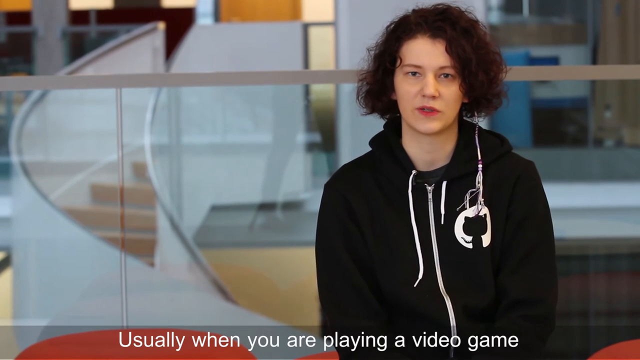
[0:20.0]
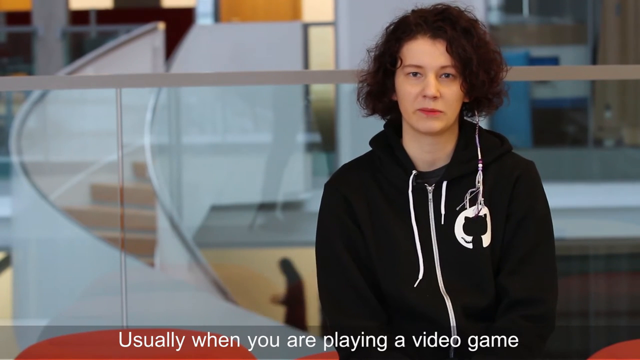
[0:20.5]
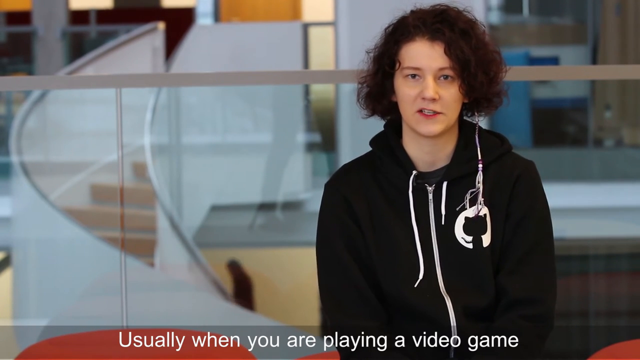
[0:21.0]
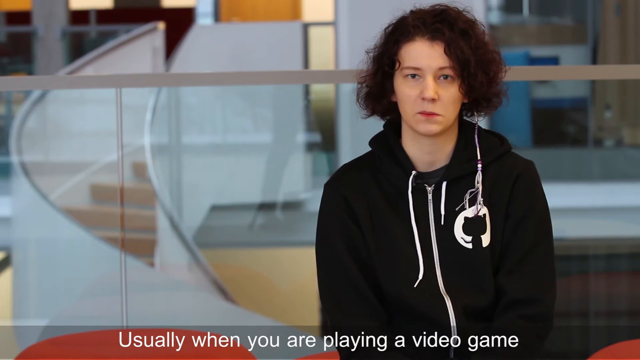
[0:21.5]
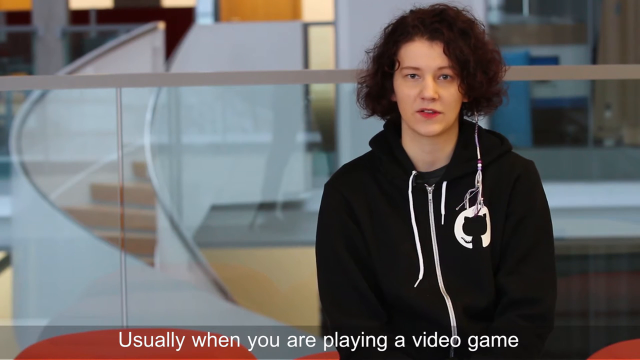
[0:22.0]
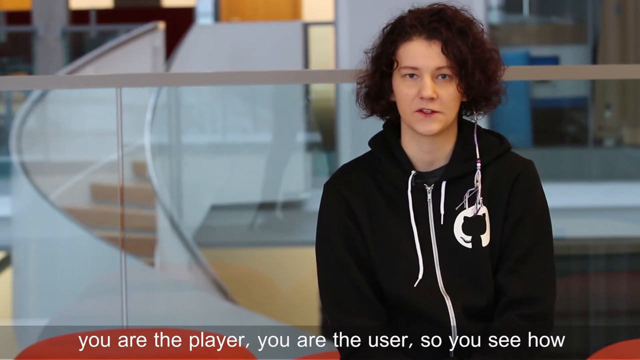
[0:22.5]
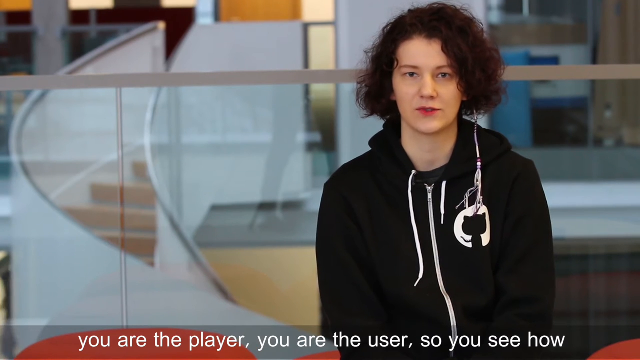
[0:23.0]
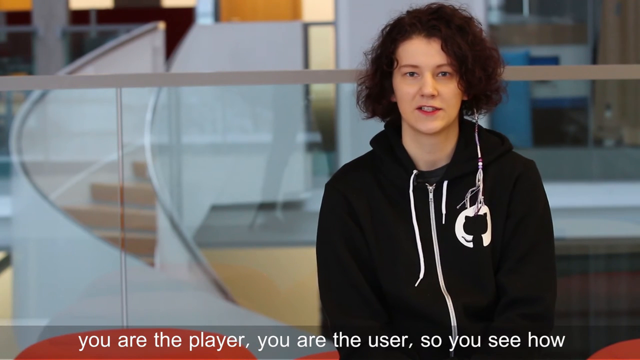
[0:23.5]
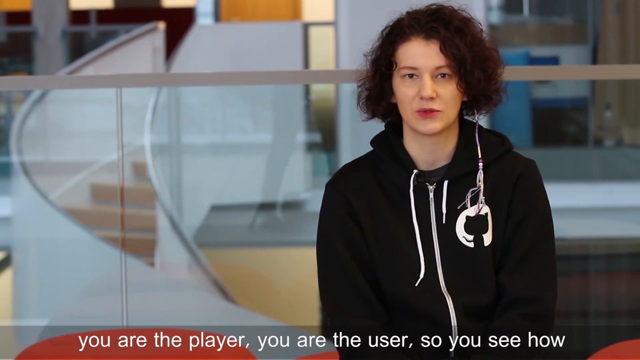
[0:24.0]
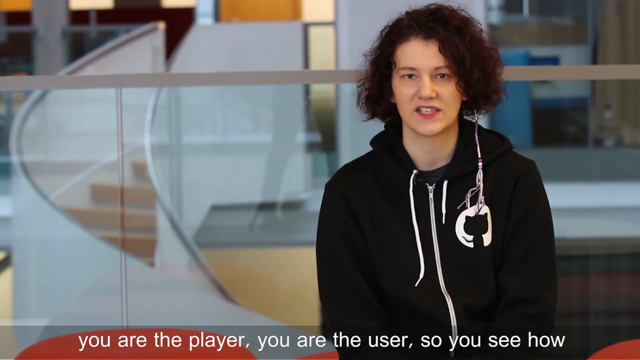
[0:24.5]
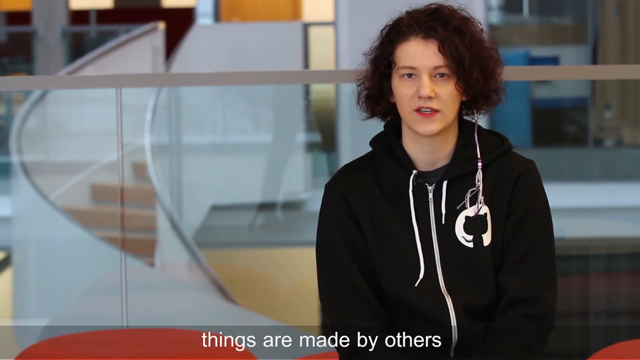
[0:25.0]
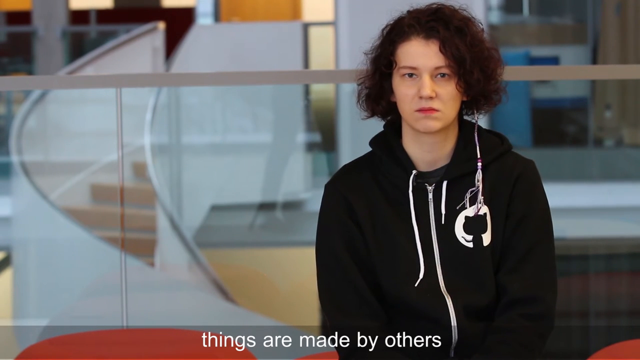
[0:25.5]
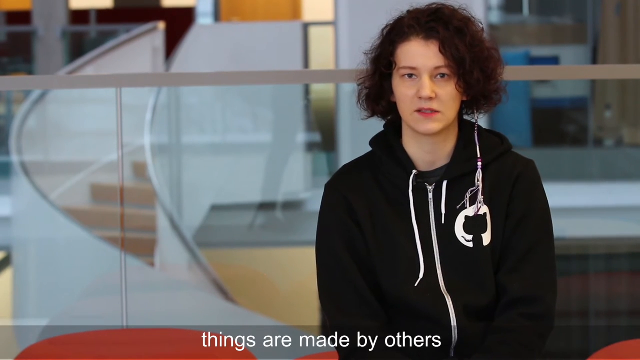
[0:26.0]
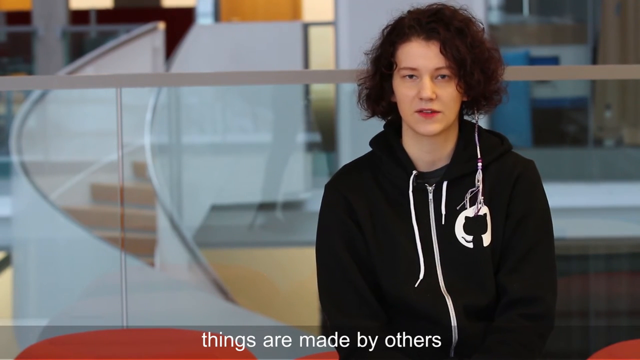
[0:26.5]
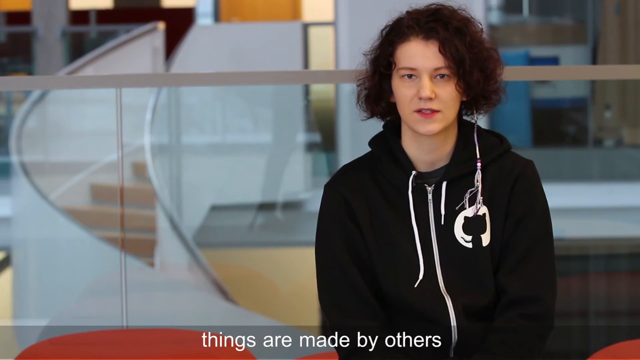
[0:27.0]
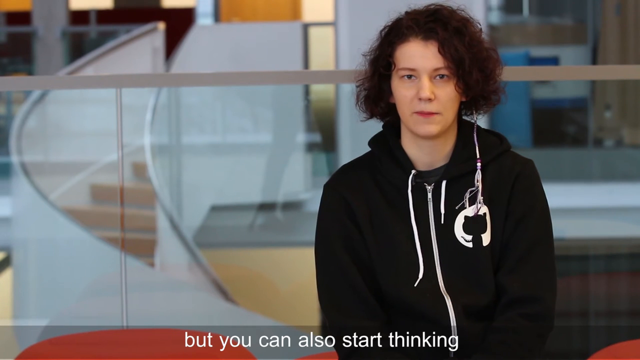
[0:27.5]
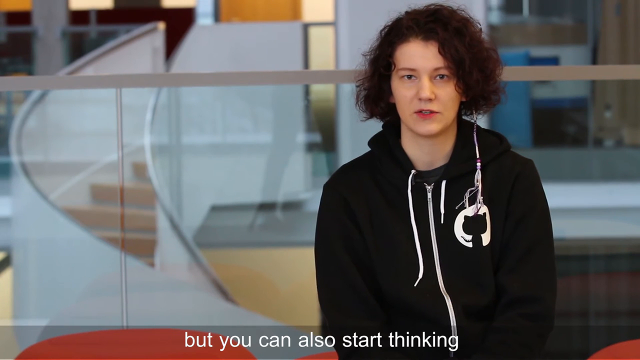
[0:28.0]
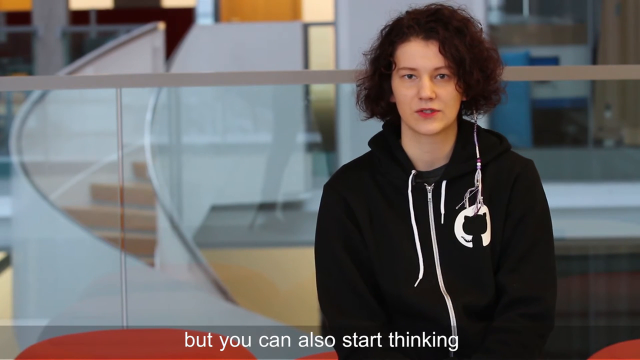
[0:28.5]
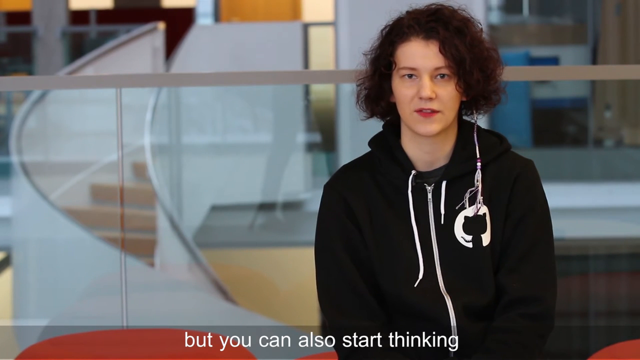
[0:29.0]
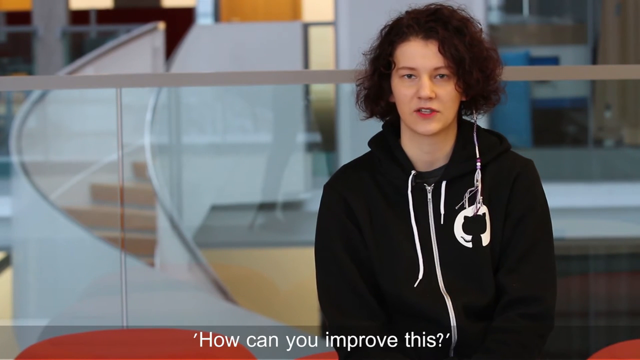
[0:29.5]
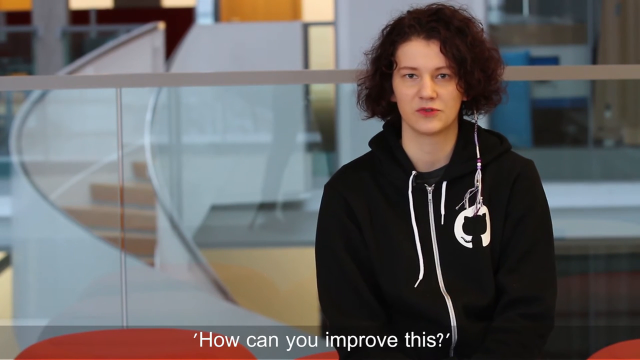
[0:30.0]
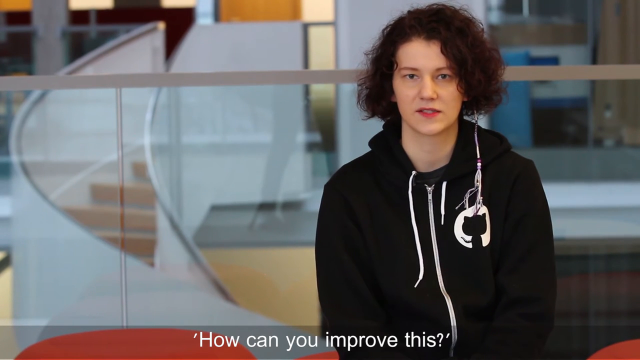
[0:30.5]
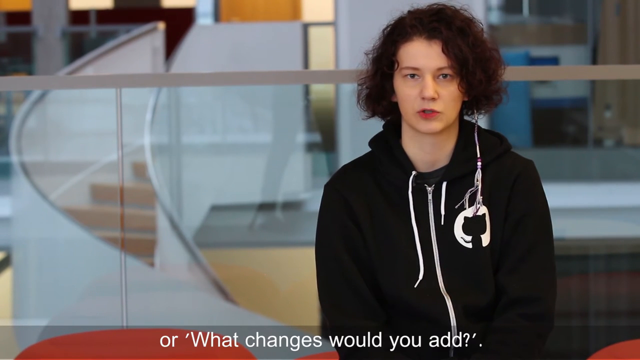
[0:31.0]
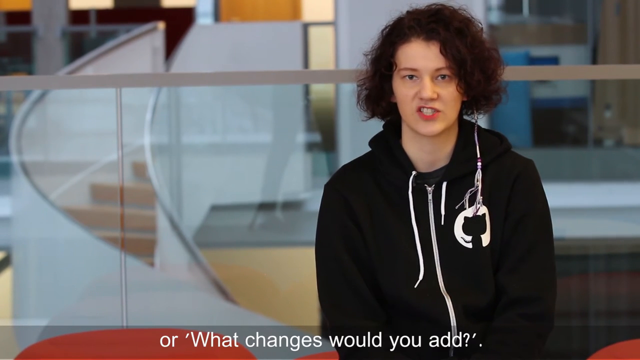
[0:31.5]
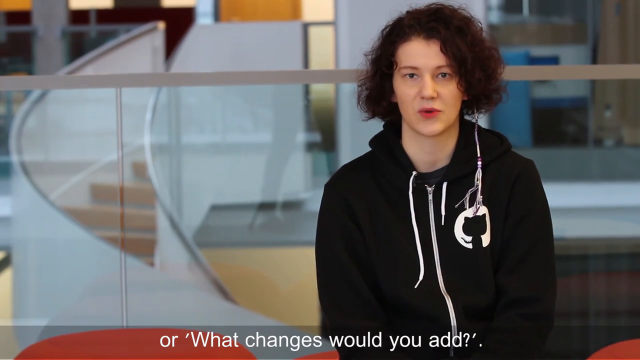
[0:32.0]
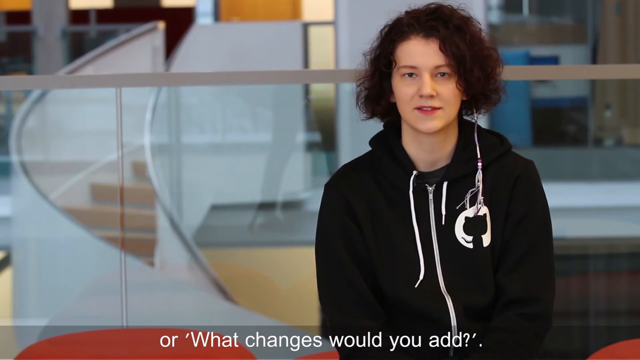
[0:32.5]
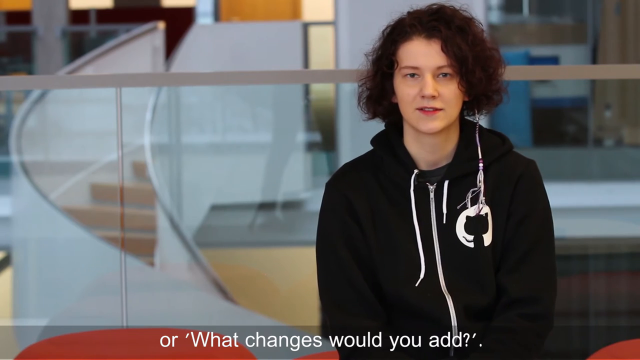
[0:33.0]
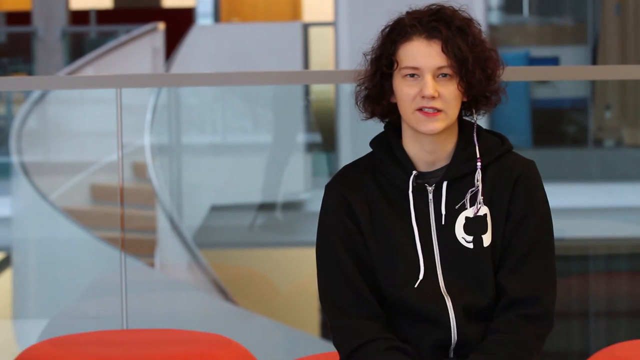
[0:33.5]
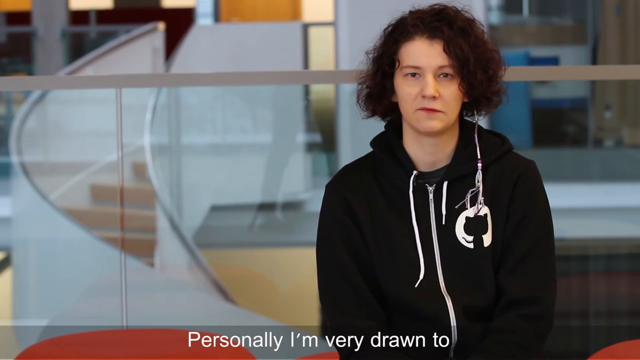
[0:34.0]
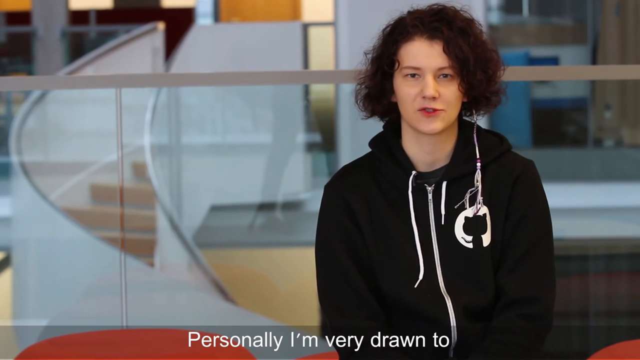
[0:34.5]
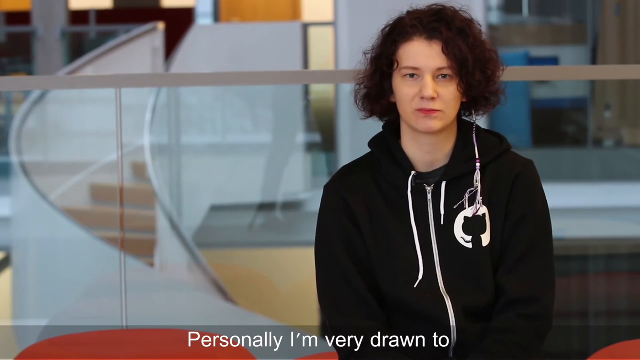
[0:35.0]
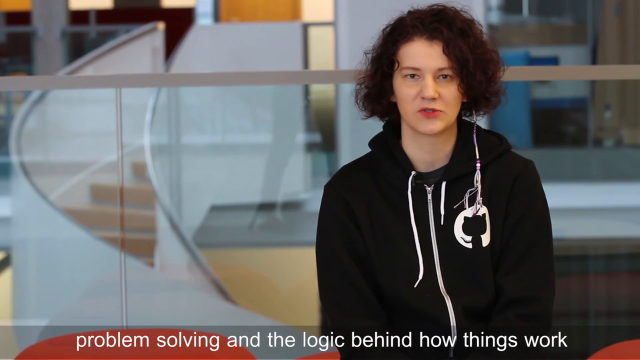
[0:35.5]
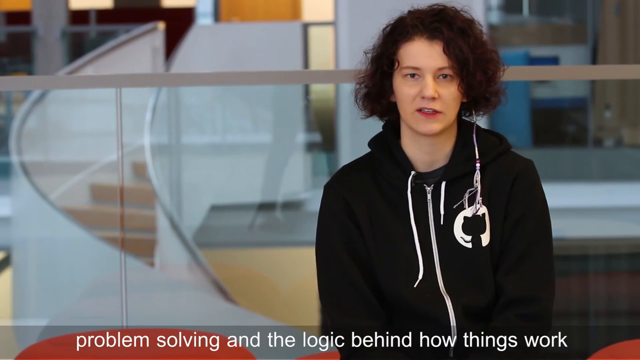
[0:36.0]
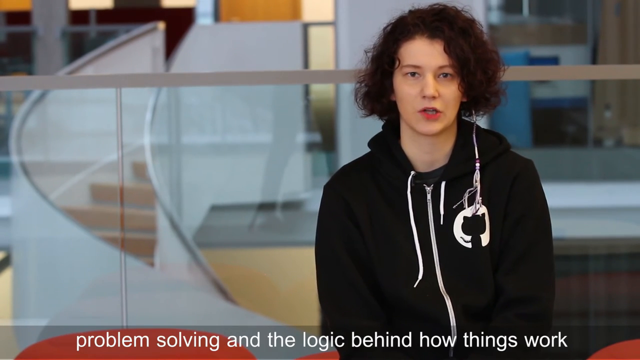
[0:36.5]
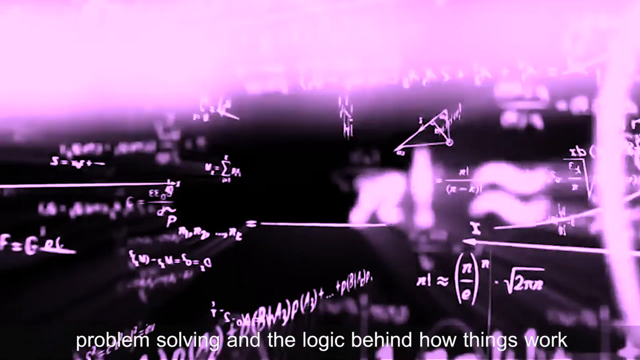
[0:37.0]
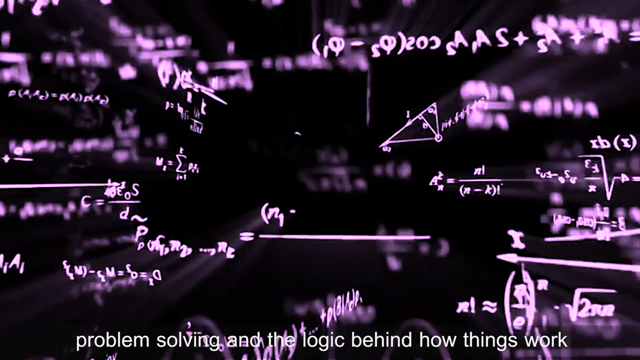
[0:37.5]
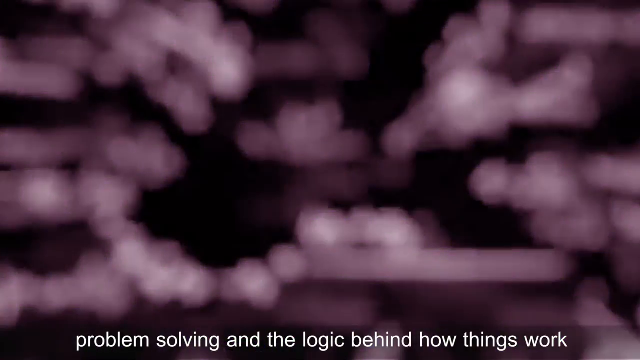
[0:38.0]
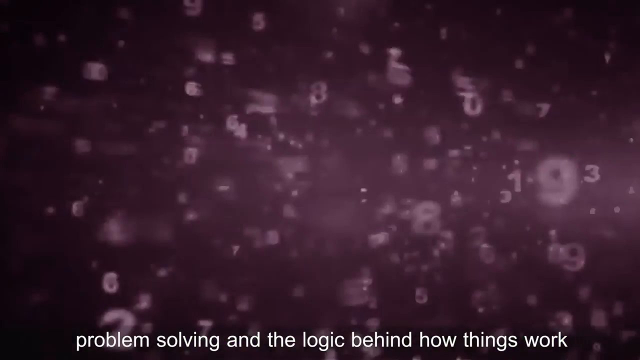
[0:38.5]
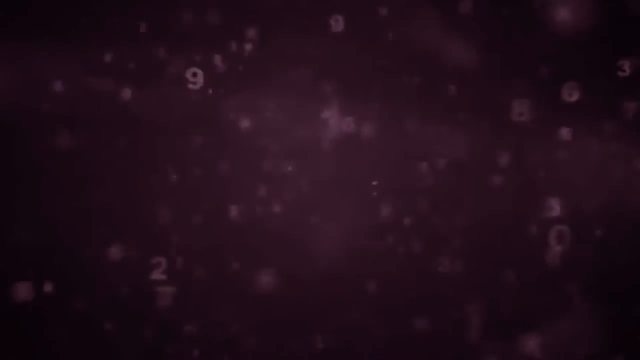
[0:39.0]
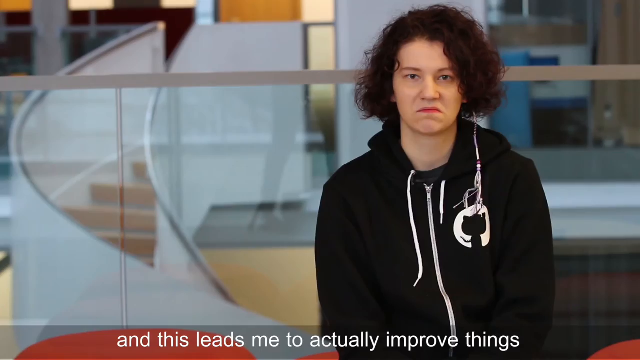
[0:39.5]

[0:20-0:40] A young girl with short, curly brown hair wears a hoodie jacket that looks pretty new, with a small white and black circular design shaped as a cat. Text at the bottom of the screen reads "usually when you are playing a video game you are the player, you are the user, so you see how things are made by others. But you can also start thinking how can you improve this or what changes would you add. Personally I'm very drawn to problem solving and the logic behind how things work." The screen then changes to a bunch of math equations with numbers, and then goes back to more text that reads "and this leads me to actually improve things." Behind her is a wavy staircase made of a thin white material with silver rails, and there is also a glass wall behind her.